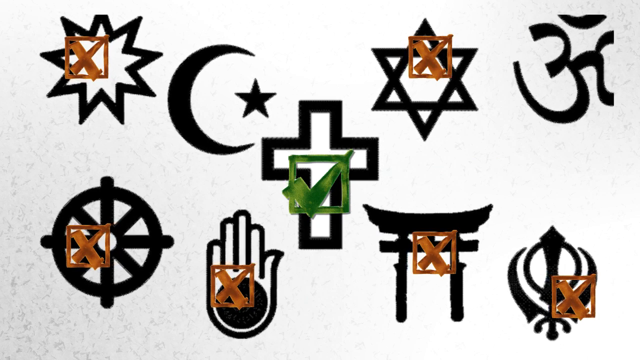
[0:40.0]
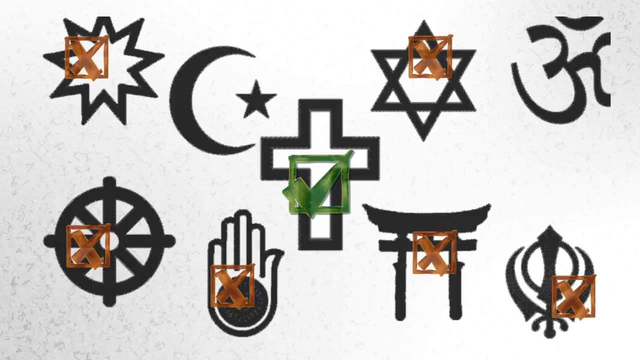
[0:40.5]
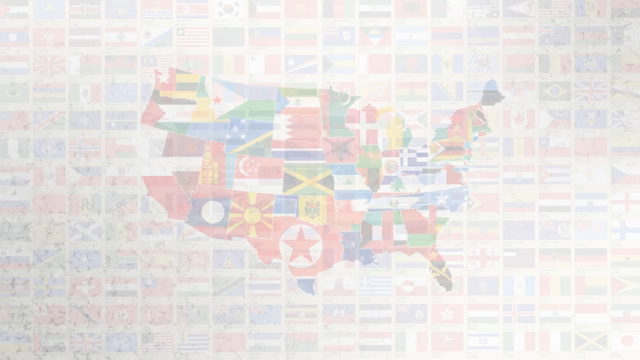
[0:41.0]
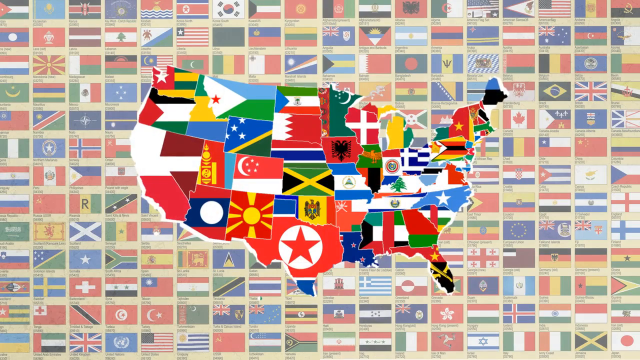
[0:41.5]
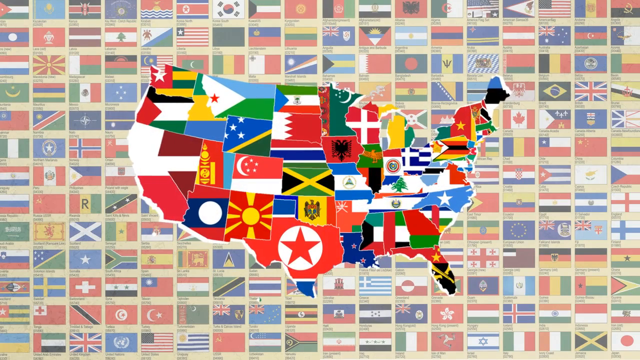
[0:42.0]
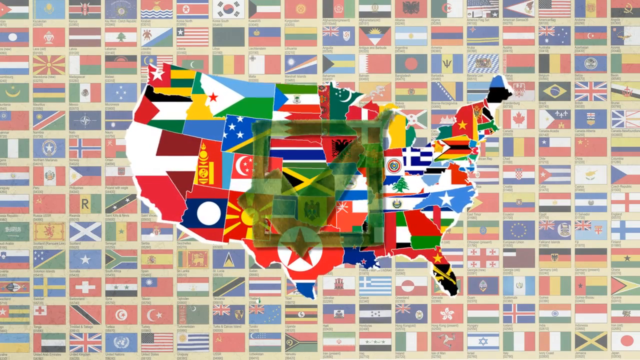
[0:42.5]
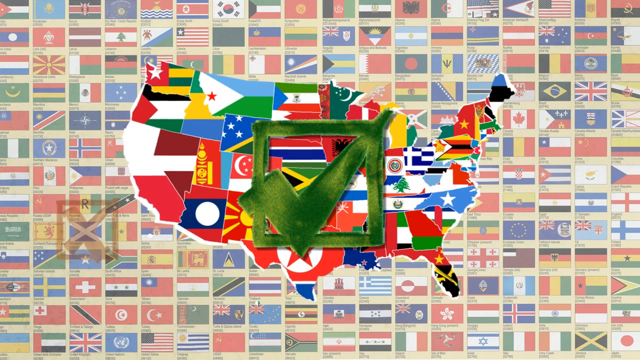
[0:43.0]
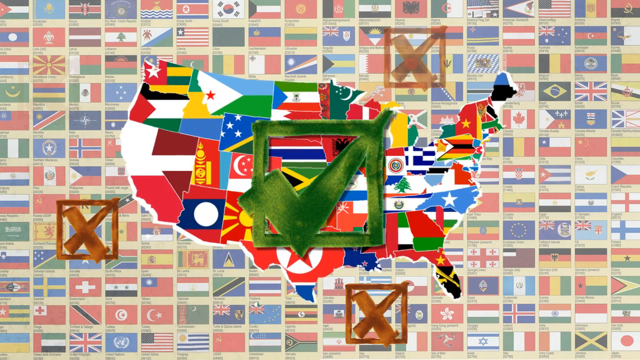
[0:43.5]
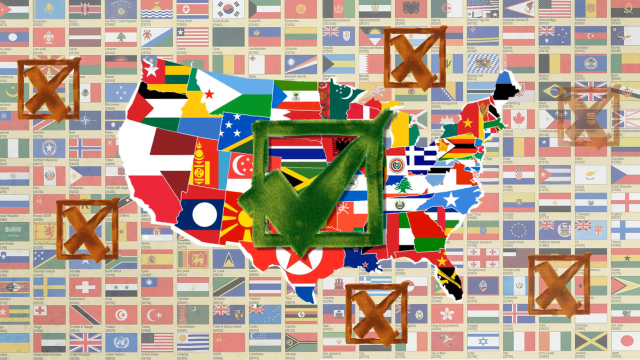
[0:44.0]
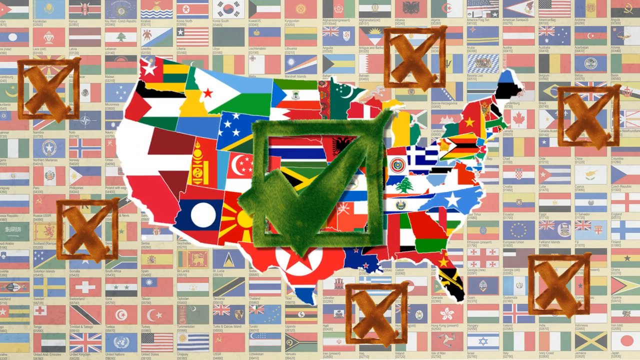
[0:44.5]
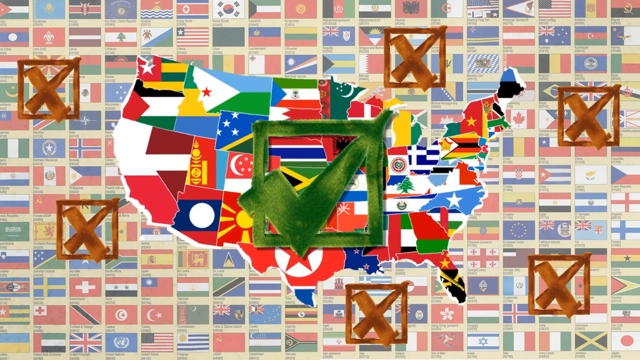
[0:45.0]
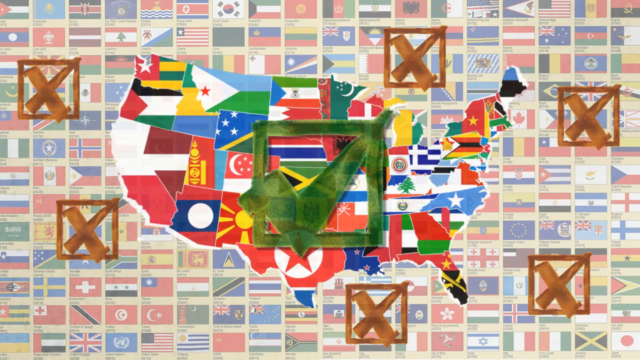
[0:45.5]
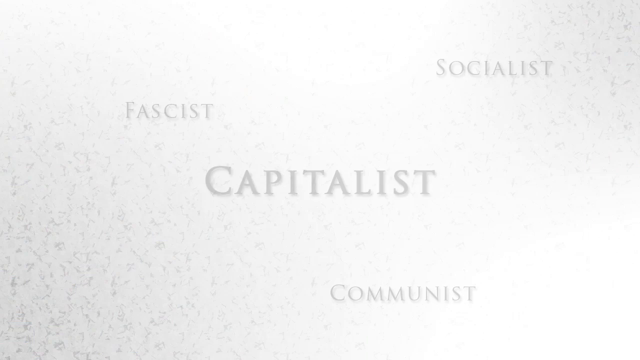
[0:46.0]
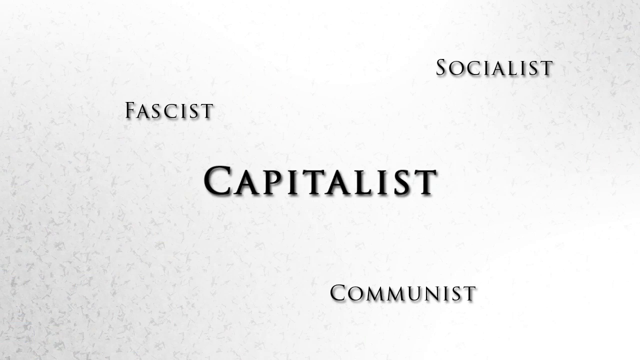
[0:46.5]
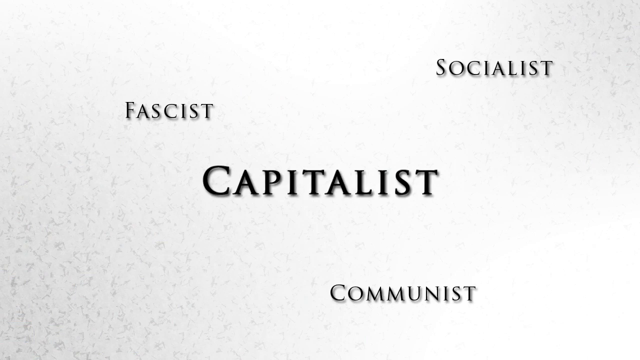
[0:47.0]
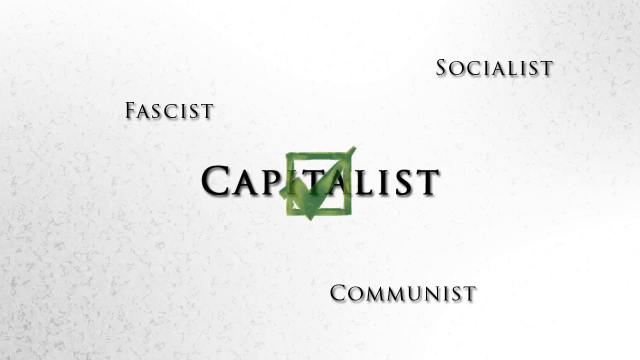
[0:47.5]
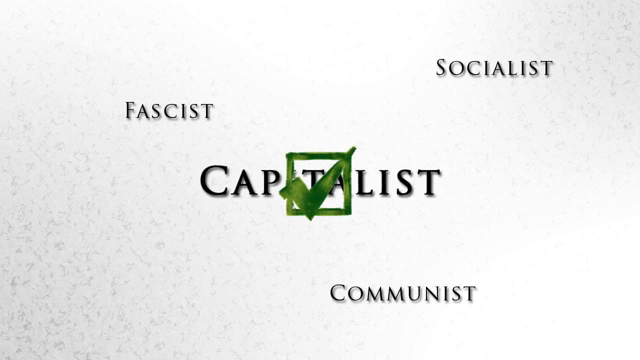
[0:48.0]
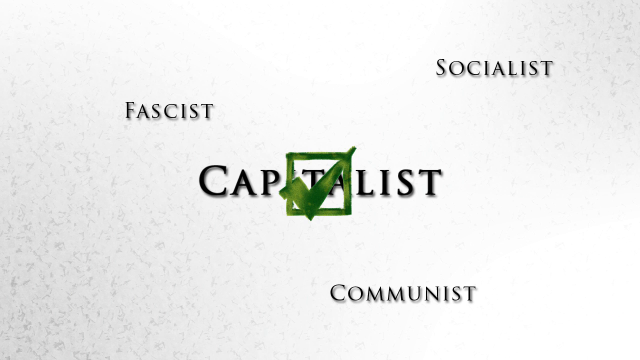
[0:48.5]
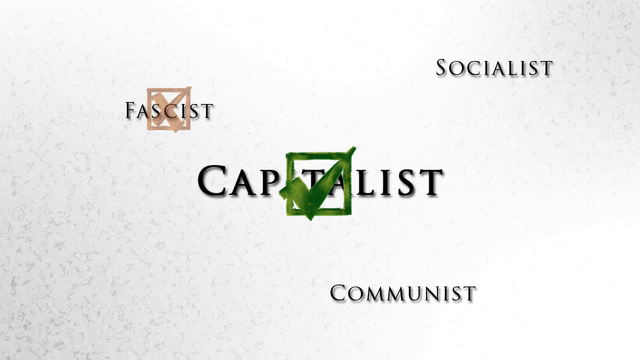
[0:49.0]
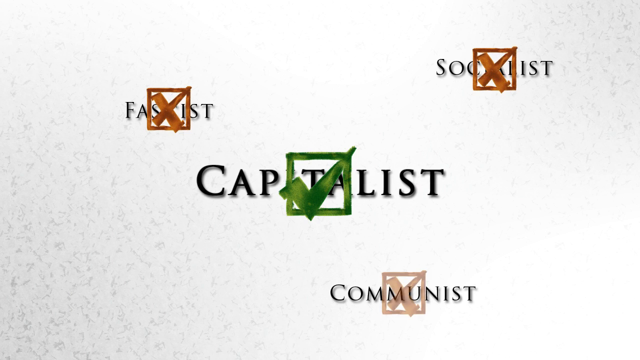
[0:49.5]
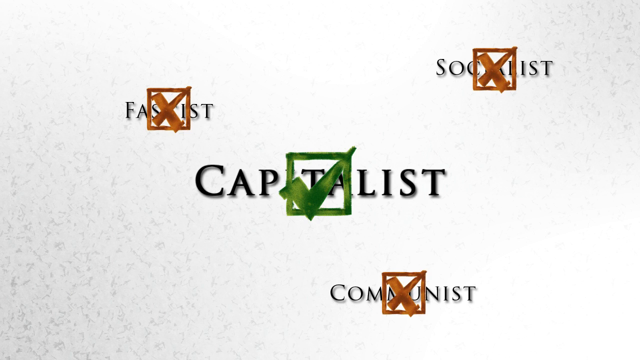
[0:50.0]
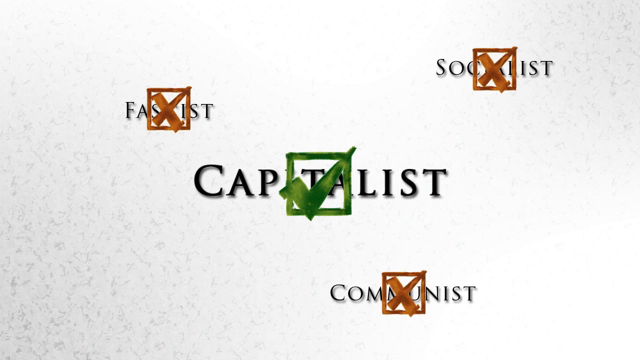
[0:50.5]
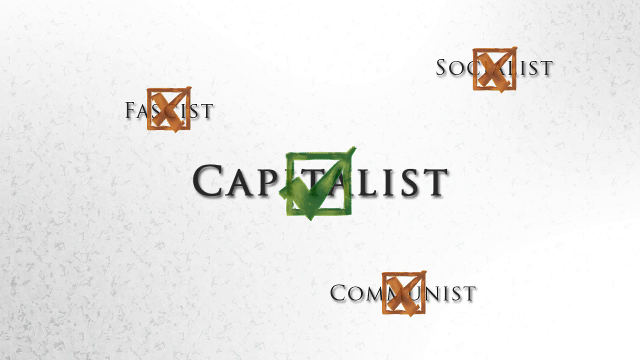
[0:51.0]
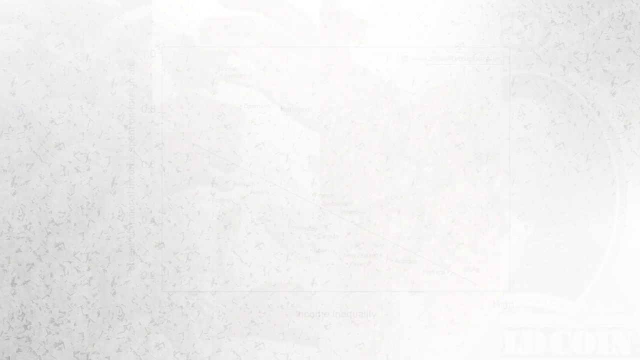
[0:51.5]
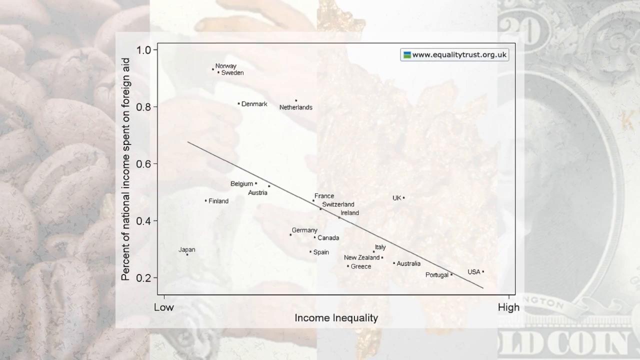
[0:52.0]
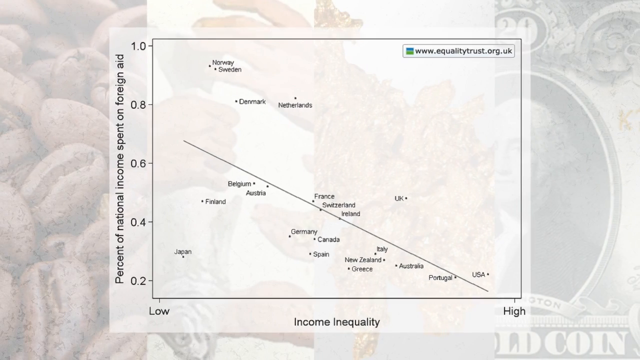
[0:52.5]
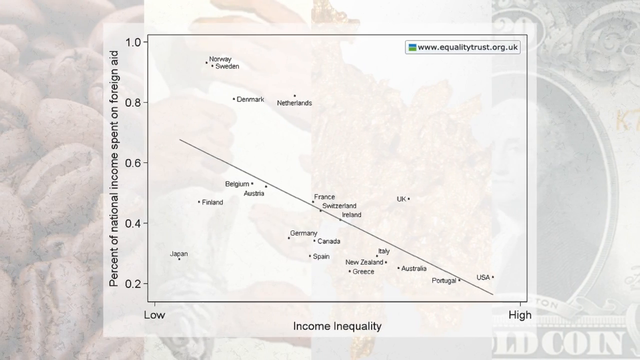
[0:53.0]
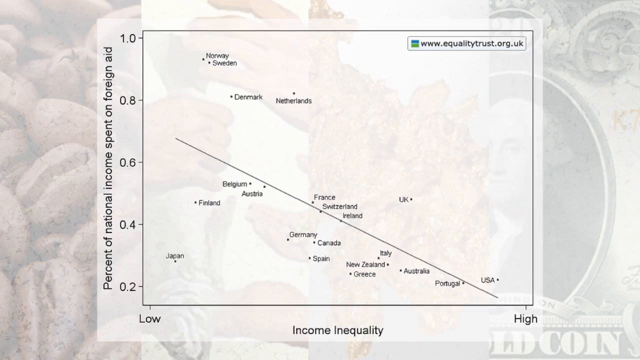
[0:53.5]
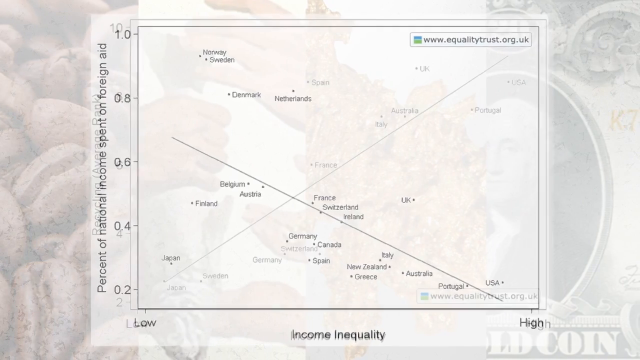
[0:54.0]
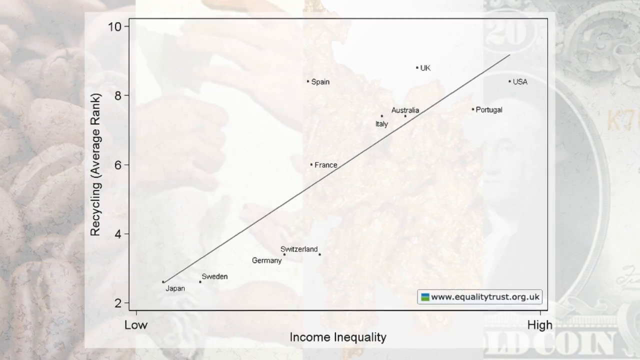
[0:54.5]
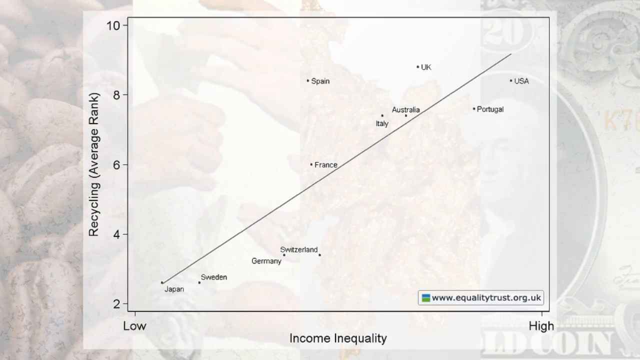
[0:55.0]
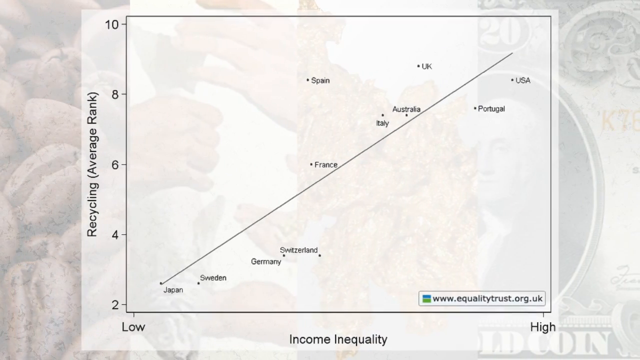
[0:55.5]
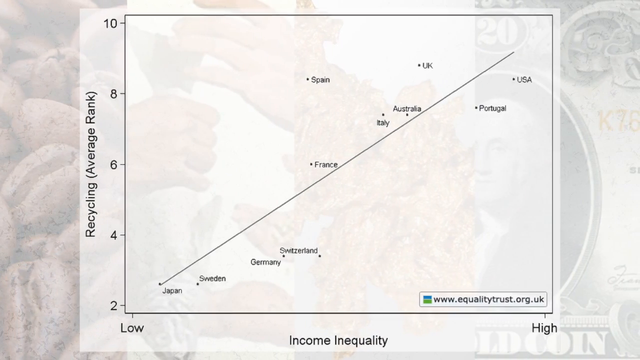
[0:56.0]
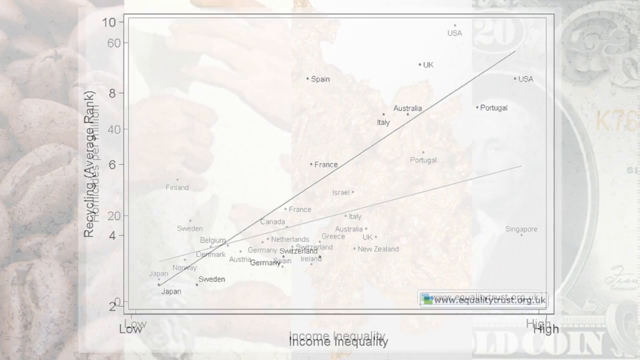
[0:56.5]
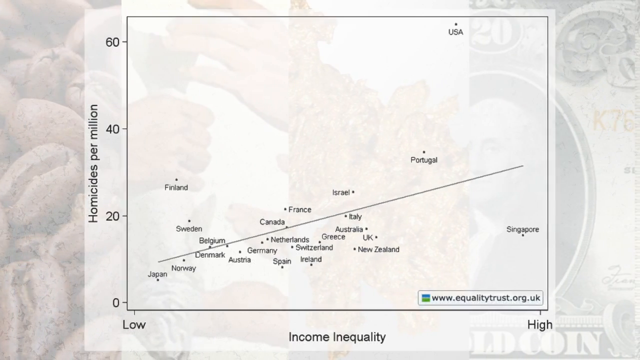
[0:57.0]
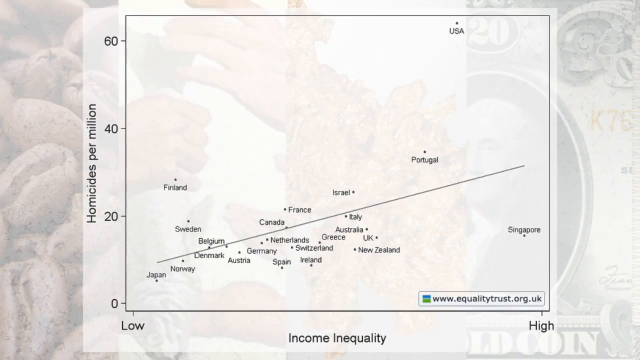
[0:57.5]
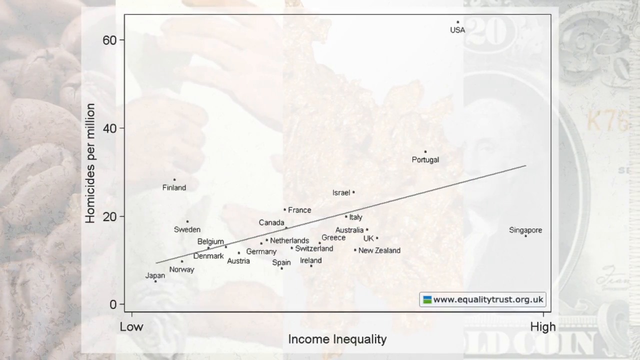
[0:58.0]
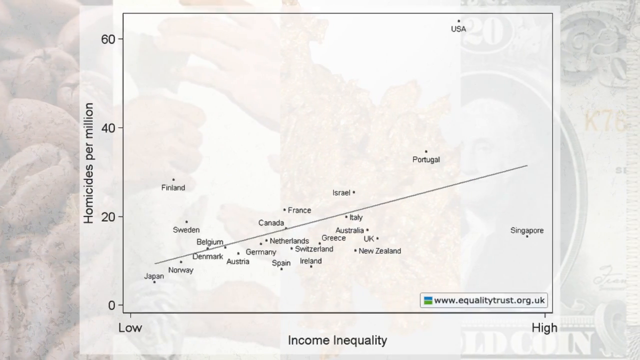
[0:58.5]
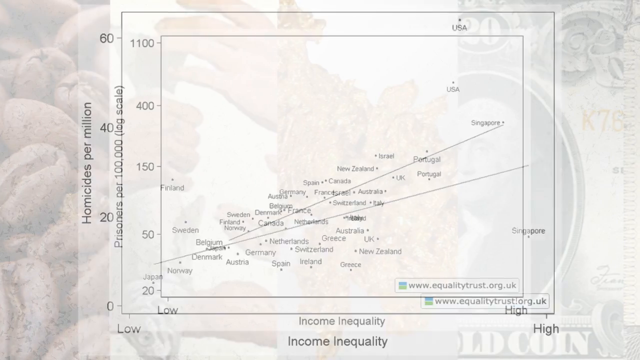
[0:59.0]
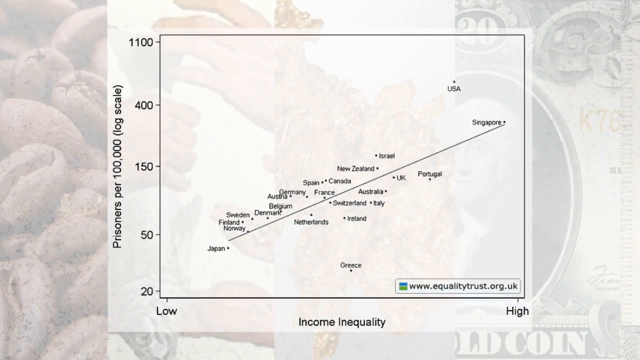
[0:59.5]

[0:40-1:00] Many different signs appear, including moons, stars and hands, symbols relating to different things in the world. A map of the United States follows, covered in different designs and colors. Next, the word "capitalist" is in the middle with a green box containing a green checkmark, surrounded by "fascists," "socialists" and "communists," each with a brown box containing a brown X. Graphs then appear very quickly: one has a line going down from left to right, and a couple have lines going up from left to right. The graphs relate to the economics of the world.